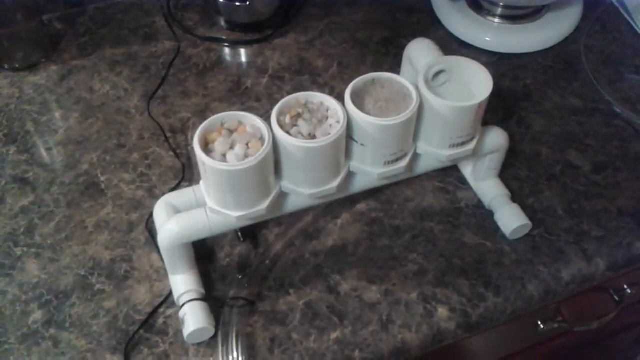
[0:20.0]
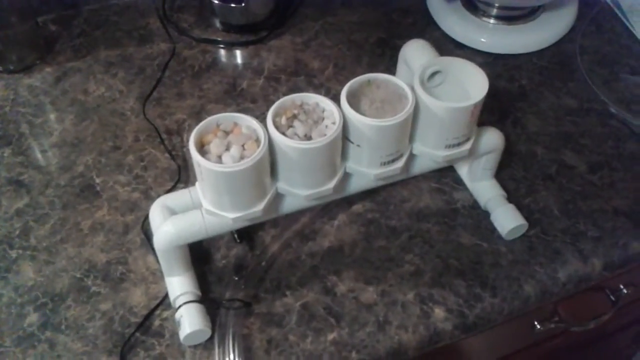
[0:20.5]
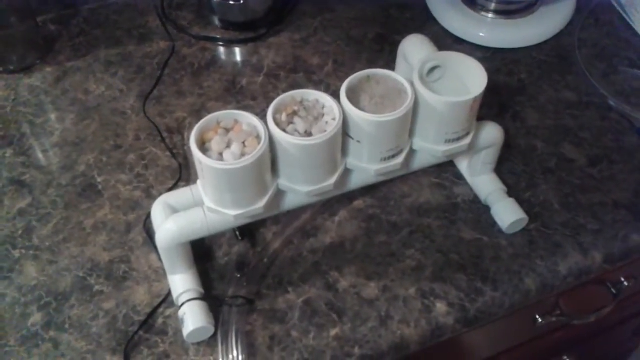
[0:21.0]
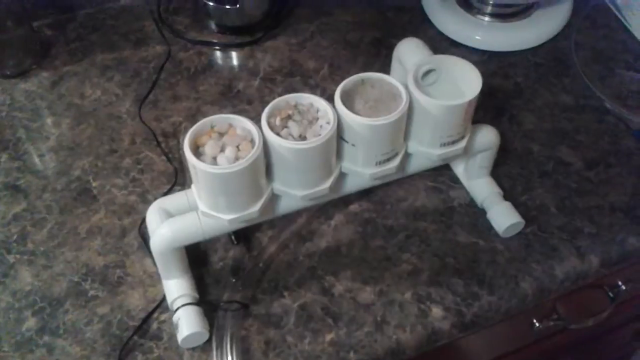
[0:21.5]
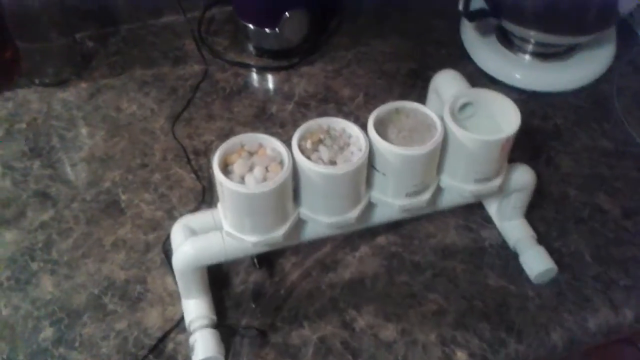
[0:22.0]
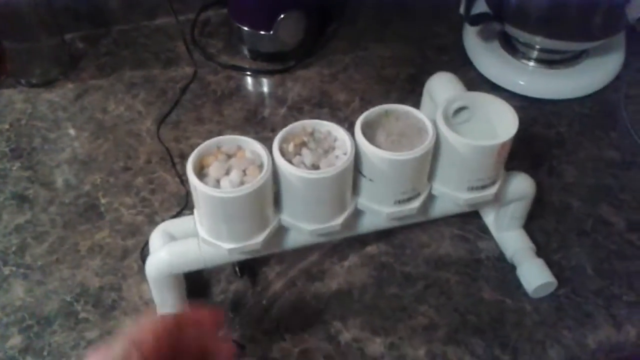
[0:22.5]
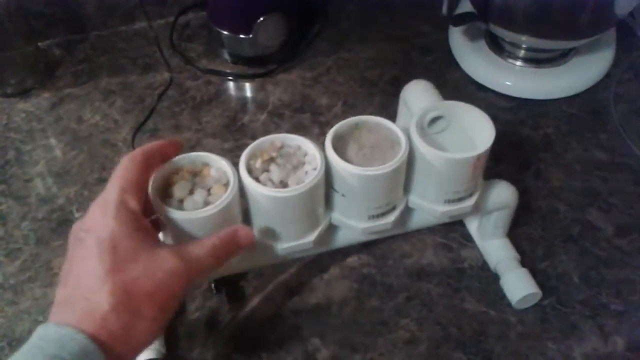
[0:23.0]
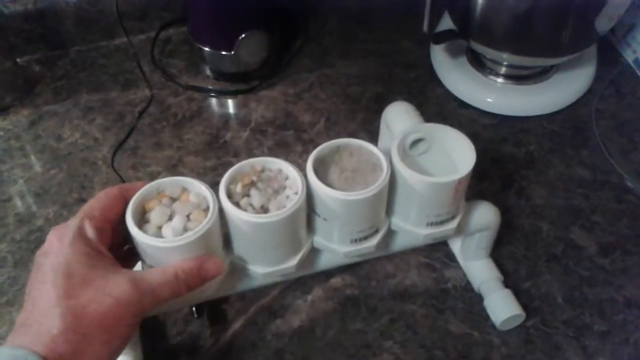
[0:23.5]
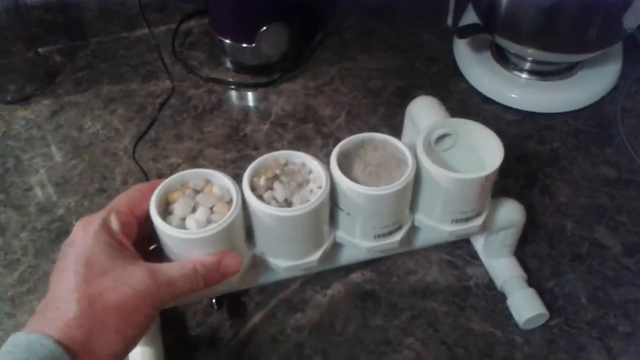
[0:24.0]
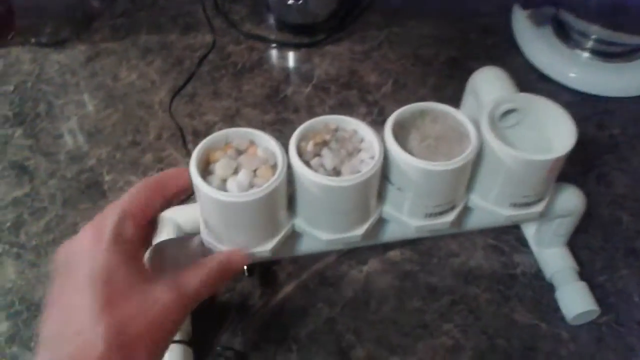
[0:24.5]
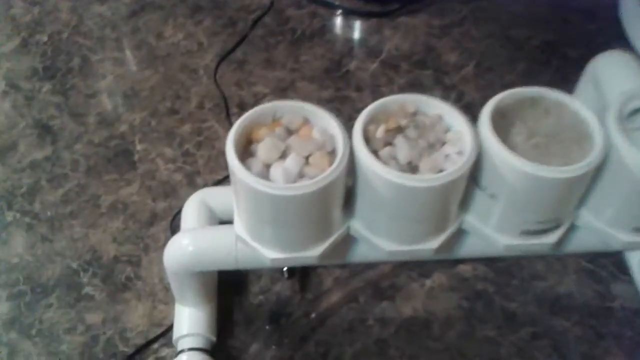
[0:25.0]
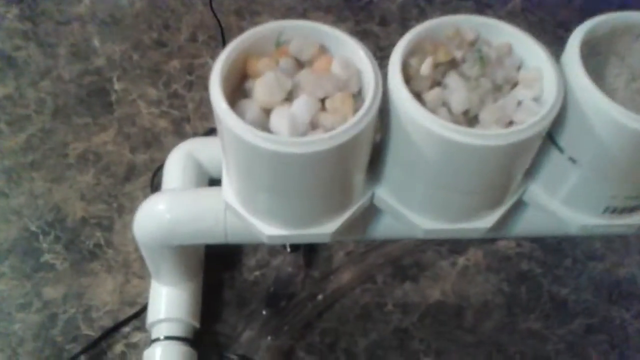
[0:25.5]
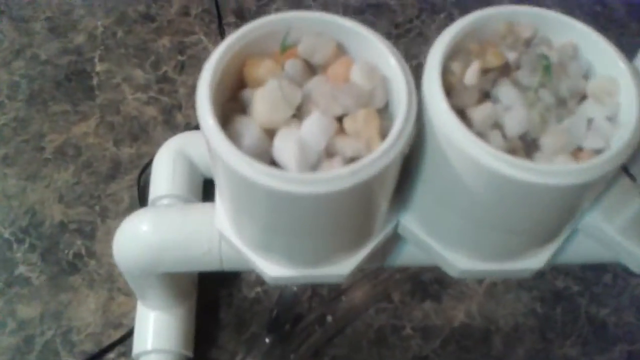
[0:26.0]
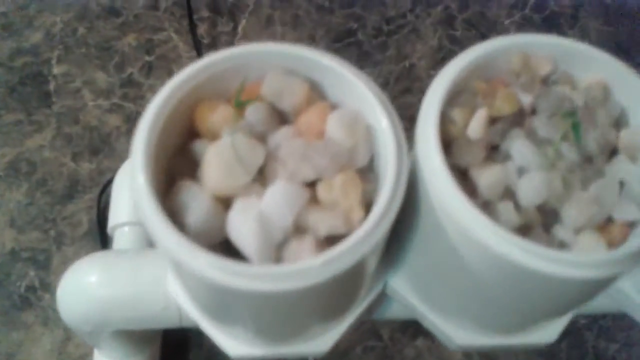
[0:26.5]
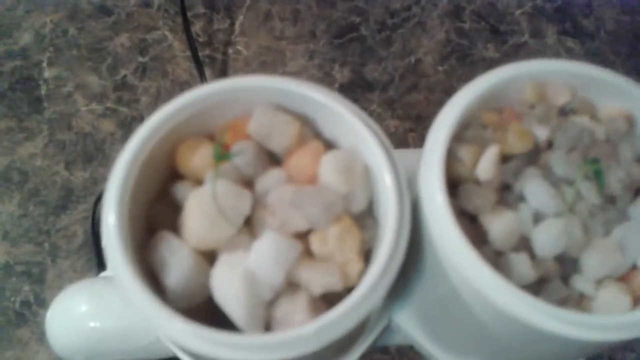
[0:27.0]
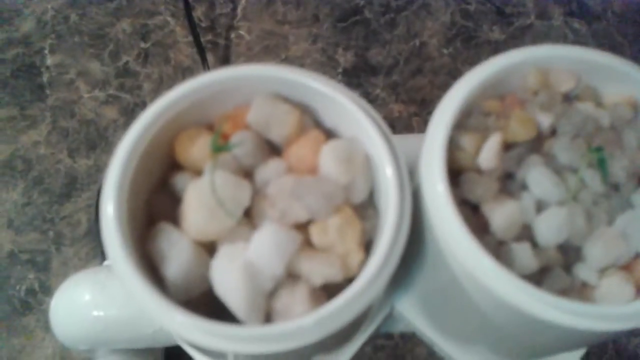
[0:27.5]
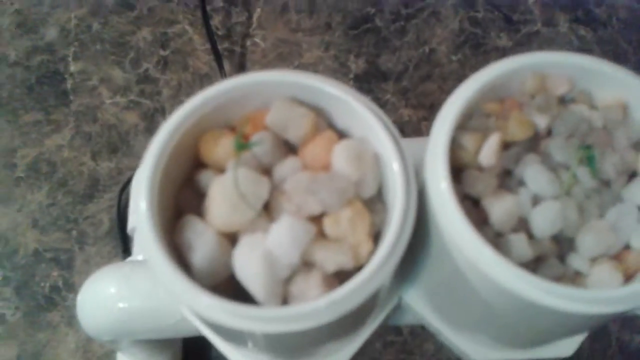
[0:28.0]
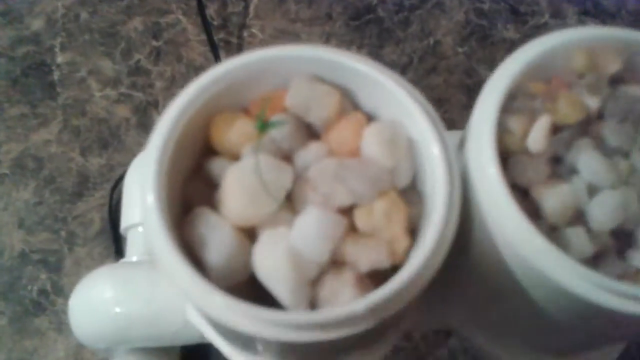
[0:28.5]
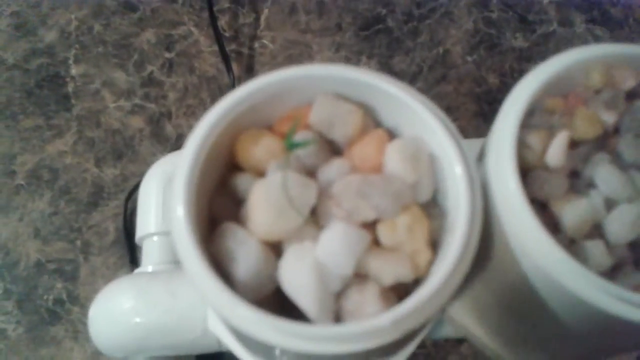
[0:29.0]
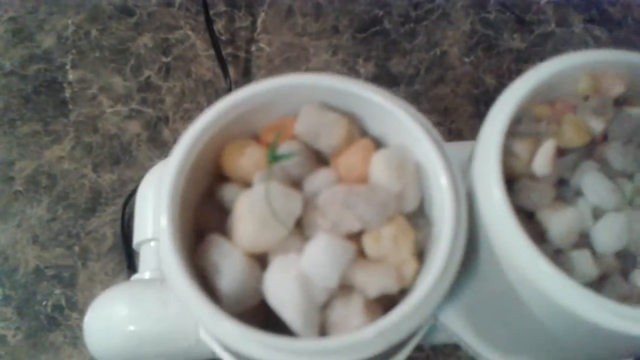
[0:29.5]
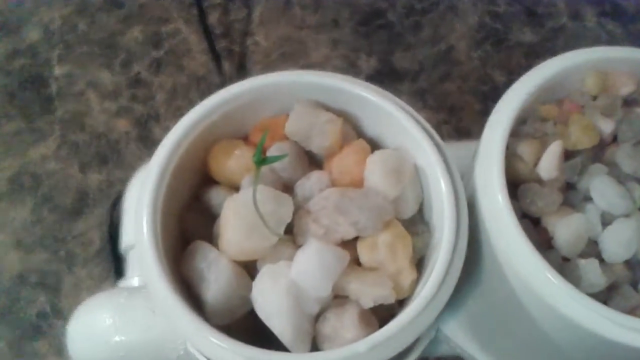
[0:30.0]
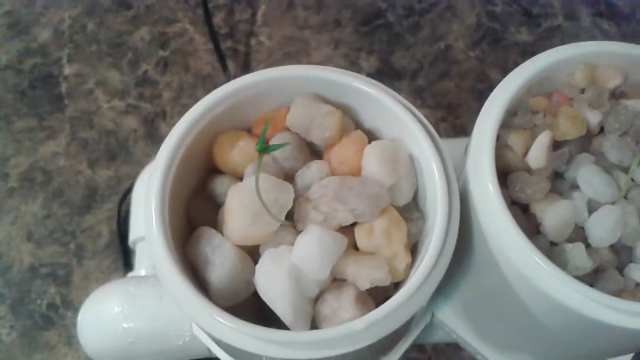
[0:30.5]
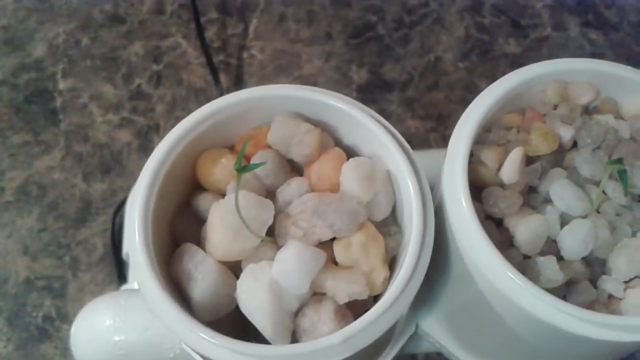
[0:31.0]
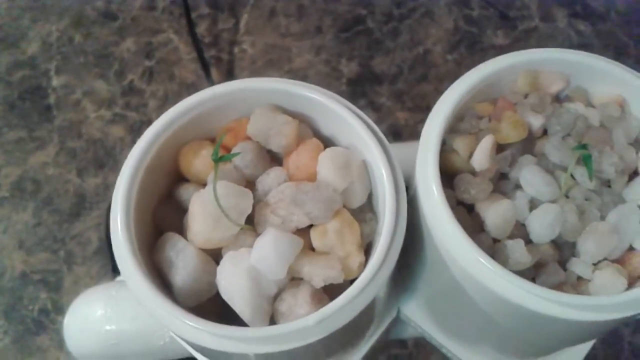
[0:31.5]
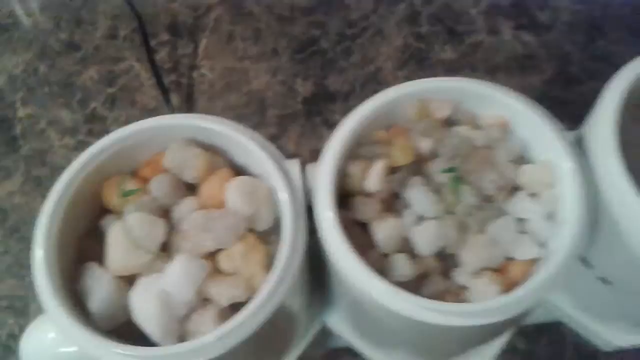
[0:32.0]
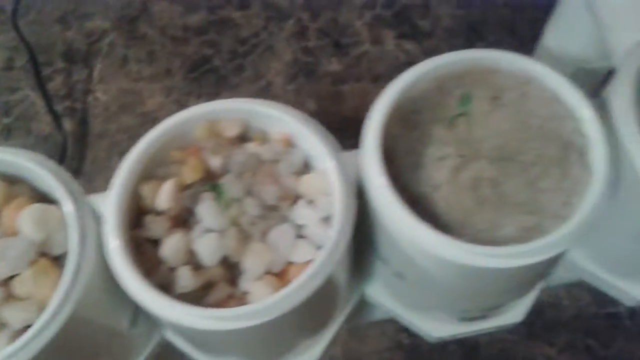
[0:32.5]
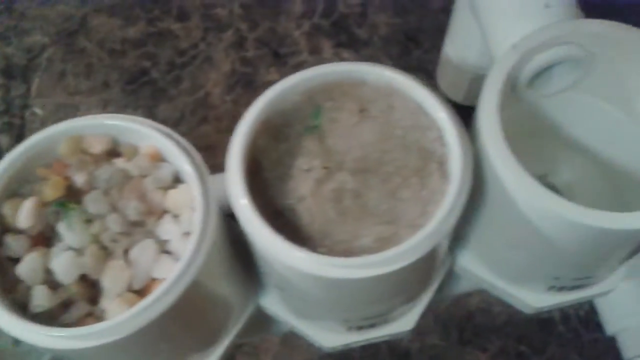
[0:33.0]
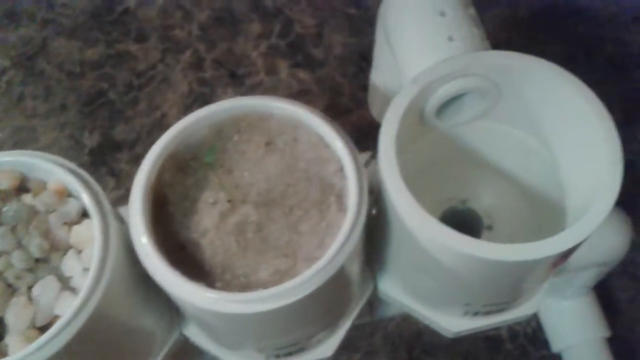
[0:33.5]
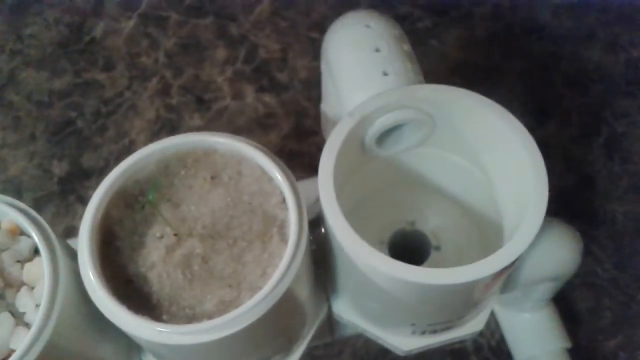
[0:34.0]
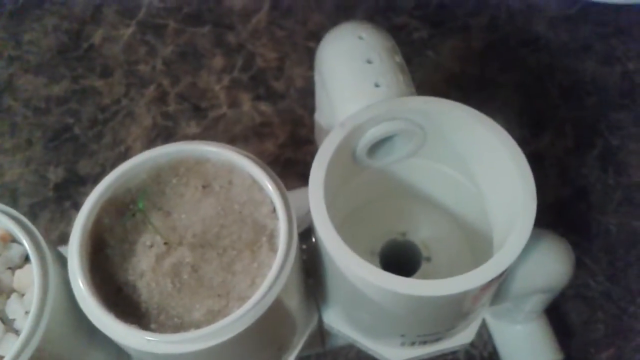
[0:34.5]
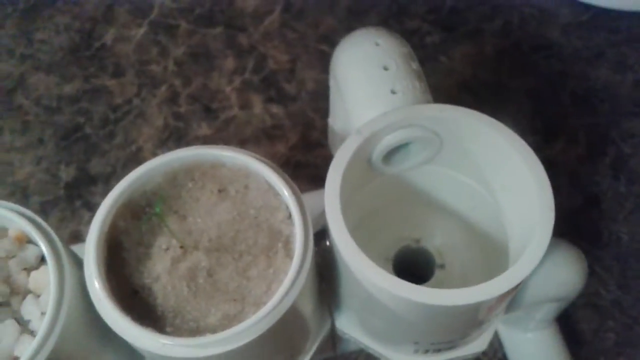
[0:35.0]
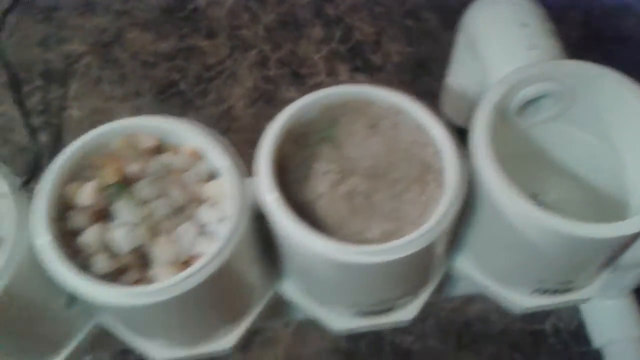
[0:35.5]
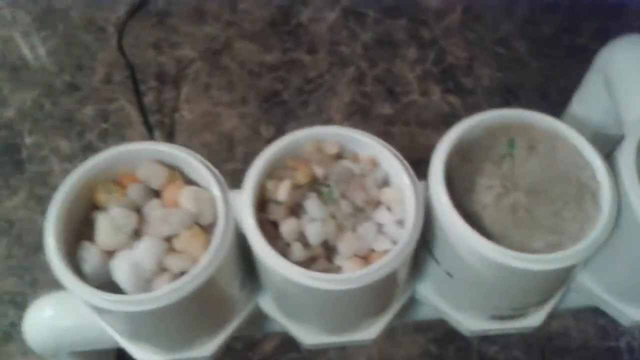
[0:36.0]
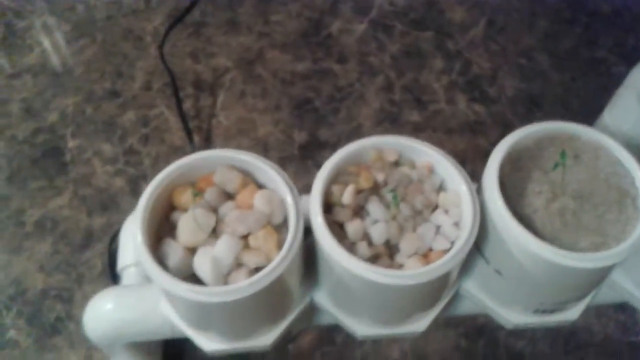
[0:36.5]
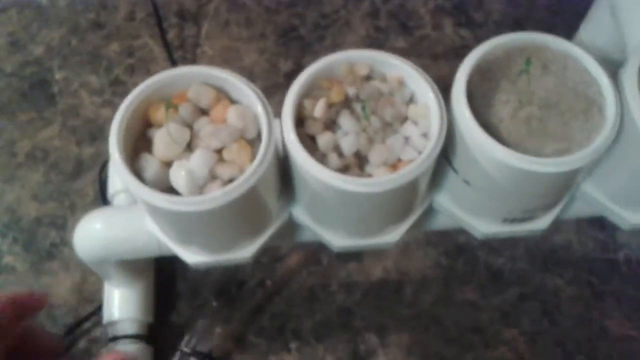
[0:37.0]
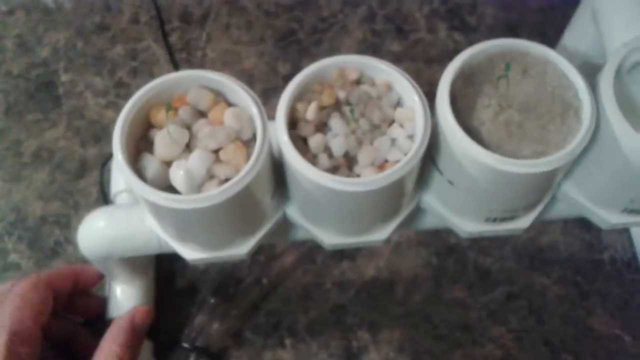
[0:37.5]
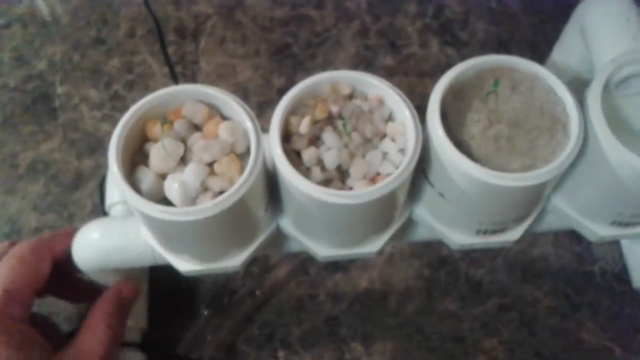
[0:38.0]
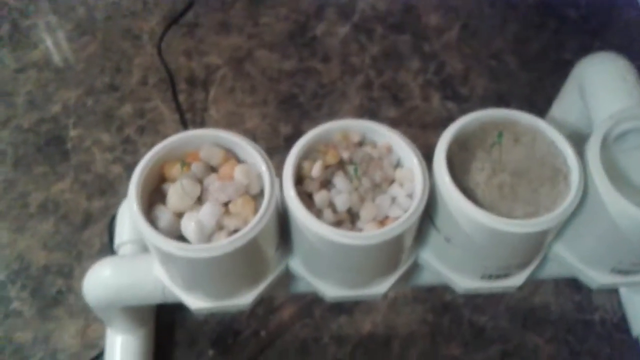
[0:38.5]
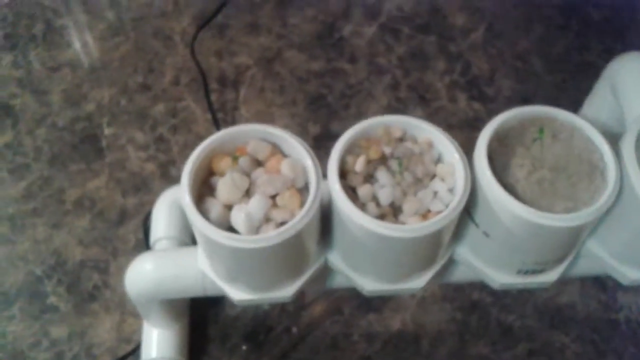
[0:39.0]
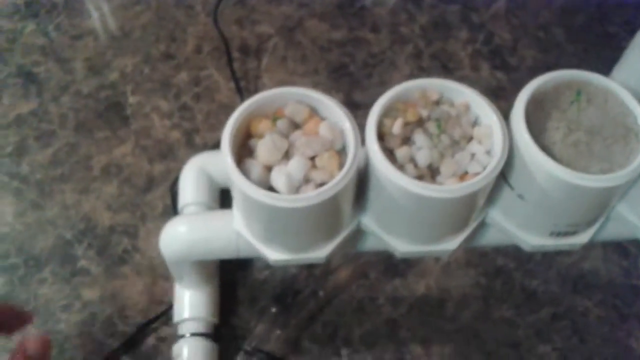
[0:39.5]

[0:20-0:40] The DIY how-to video shows something on a kitchen counter that appears to be a type of filter. It has graduated cylinders and a stand that looks like it is made of PVC, and there might be some clear plastic piping coming out of it. The four round cylinders are graduated with different amounts and thicknesses of rock: the one on the left holds white pebbles, the one next to it holds smaller pebbles, the second from the right looks like it holds clay, and the last one is empty. The person zooms in, revealing a very small stem in each of the three cylinders on the left, suggesting it may be a hydroponic growing setup made of PVC.